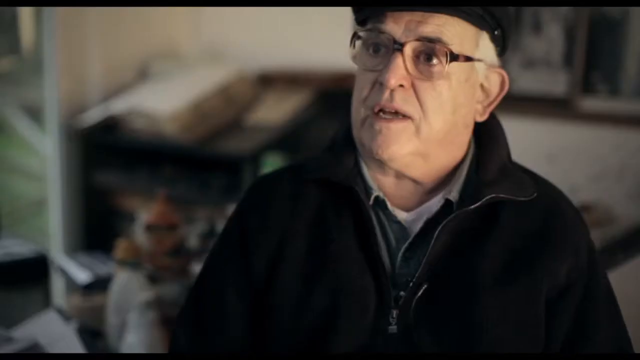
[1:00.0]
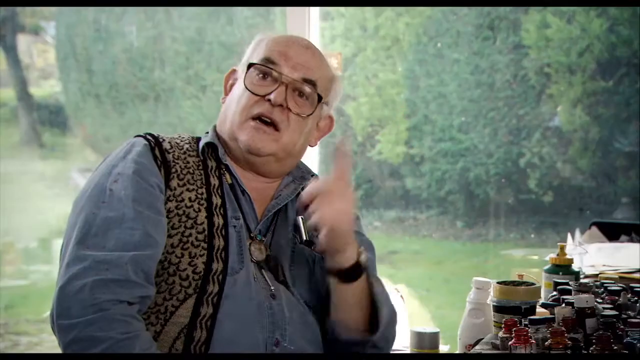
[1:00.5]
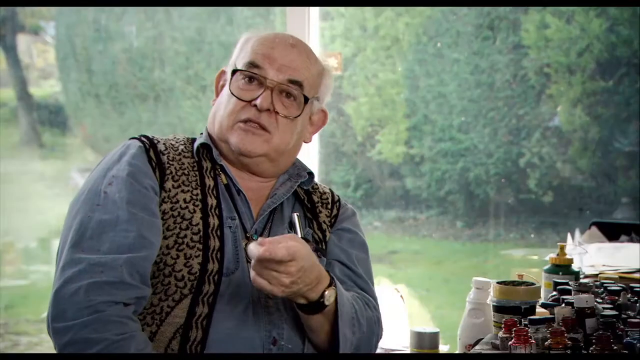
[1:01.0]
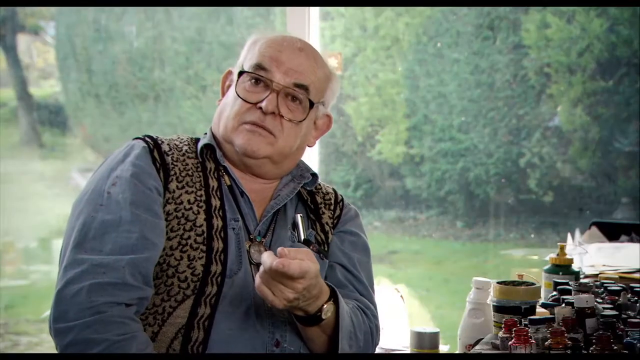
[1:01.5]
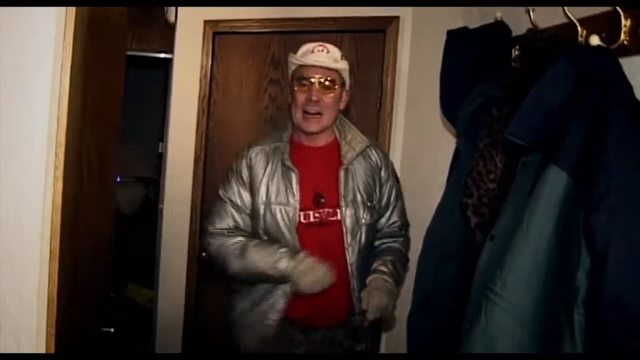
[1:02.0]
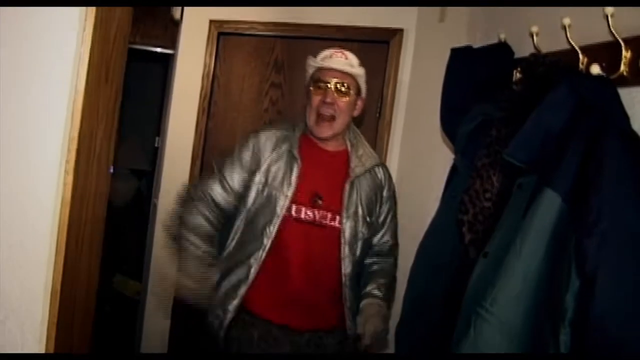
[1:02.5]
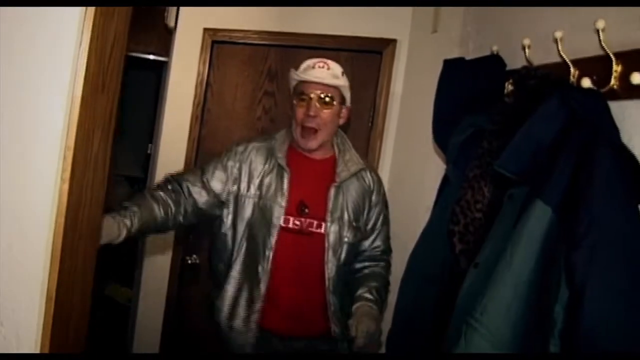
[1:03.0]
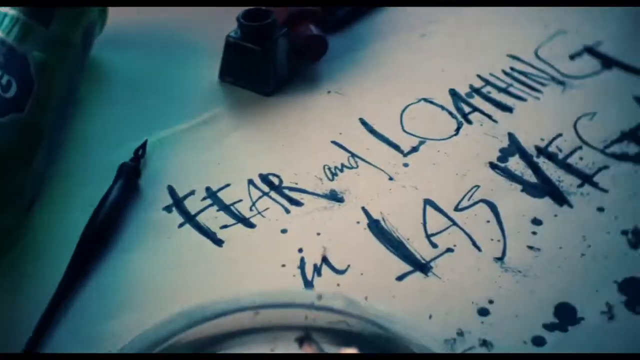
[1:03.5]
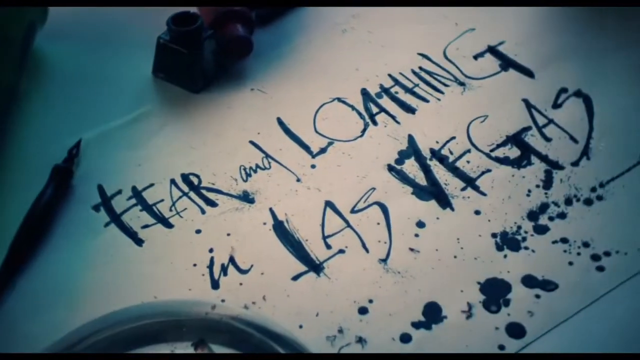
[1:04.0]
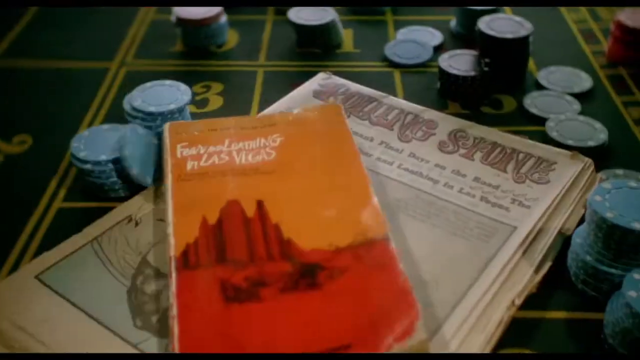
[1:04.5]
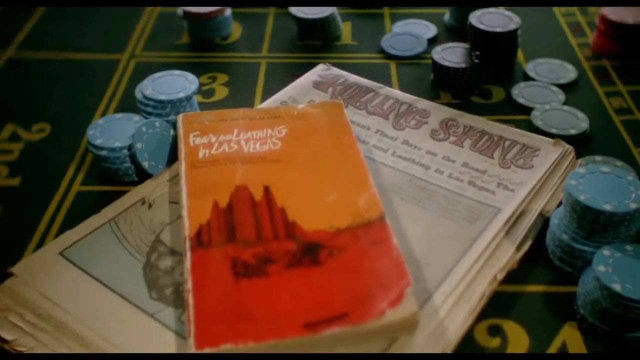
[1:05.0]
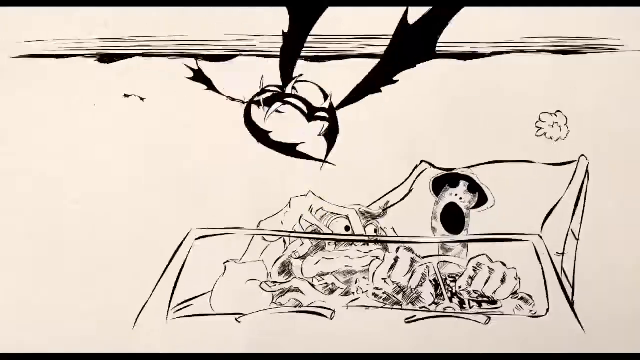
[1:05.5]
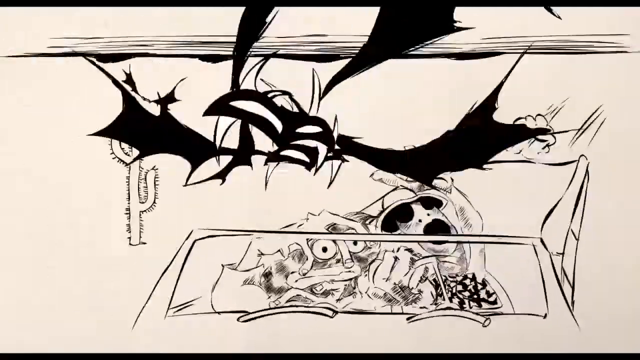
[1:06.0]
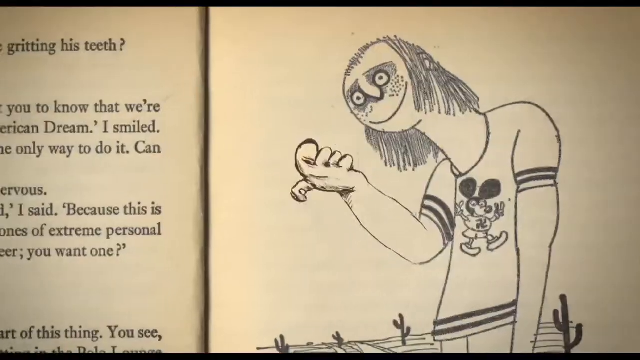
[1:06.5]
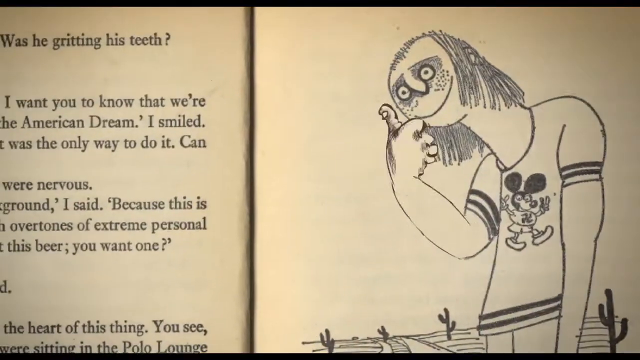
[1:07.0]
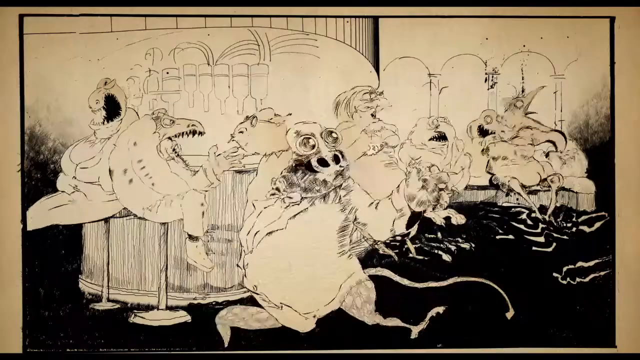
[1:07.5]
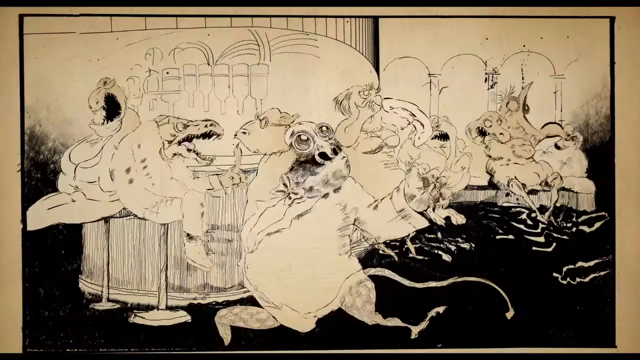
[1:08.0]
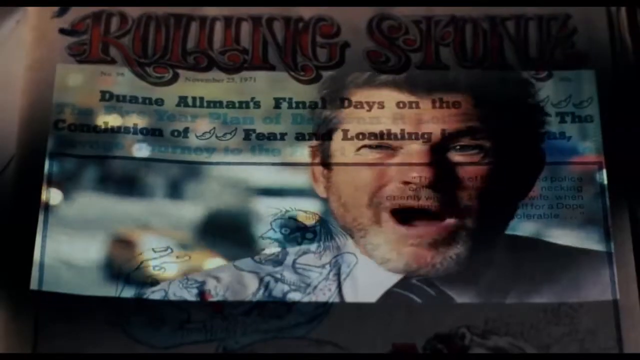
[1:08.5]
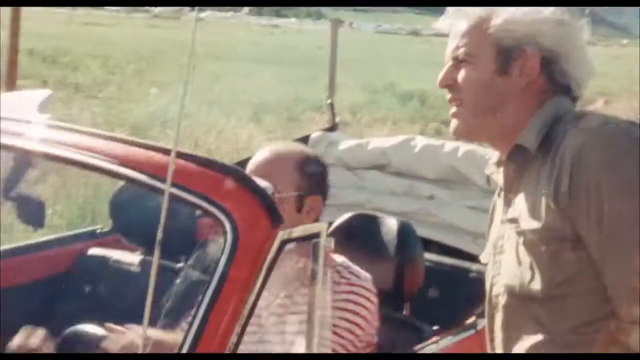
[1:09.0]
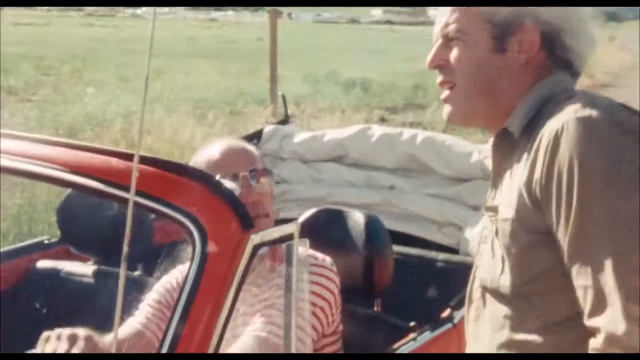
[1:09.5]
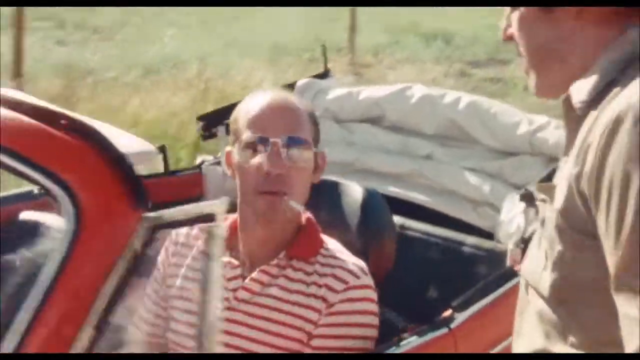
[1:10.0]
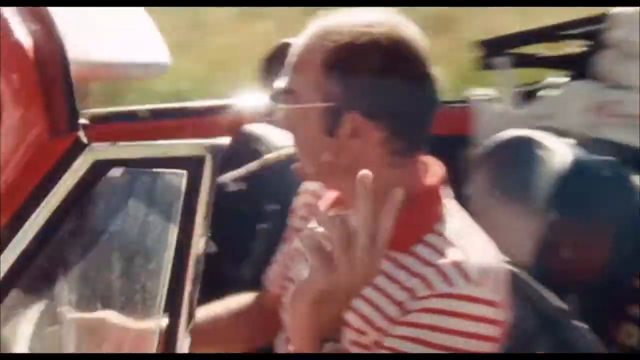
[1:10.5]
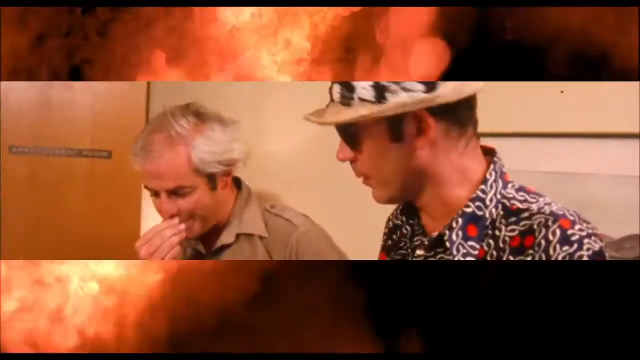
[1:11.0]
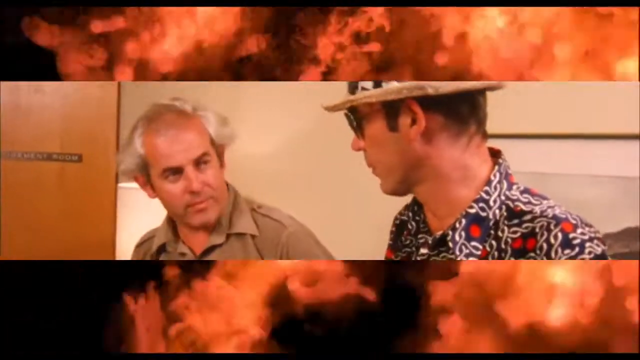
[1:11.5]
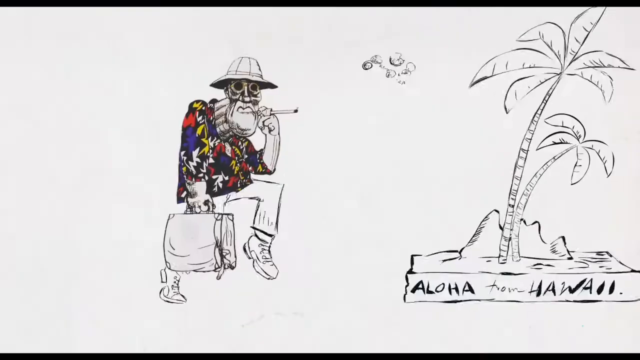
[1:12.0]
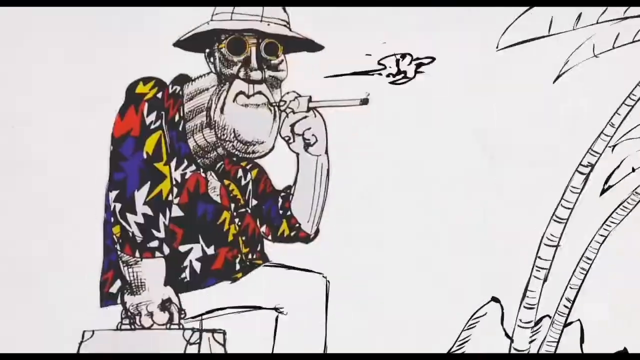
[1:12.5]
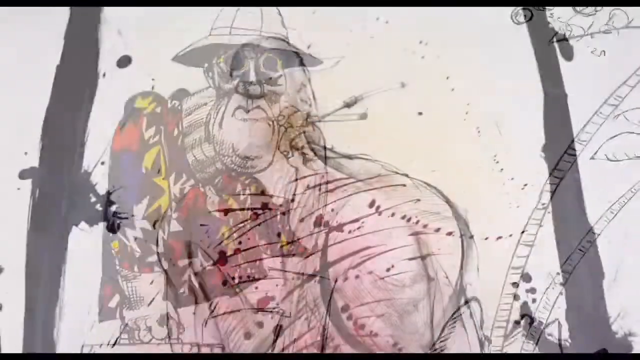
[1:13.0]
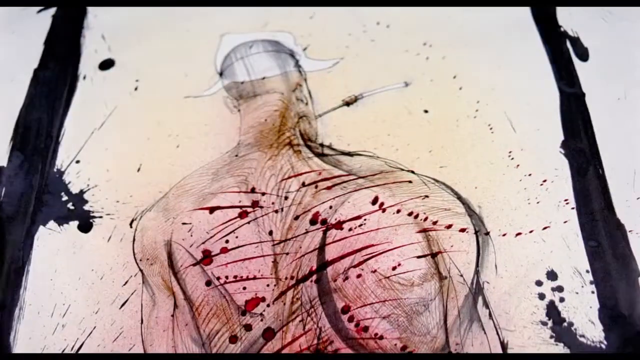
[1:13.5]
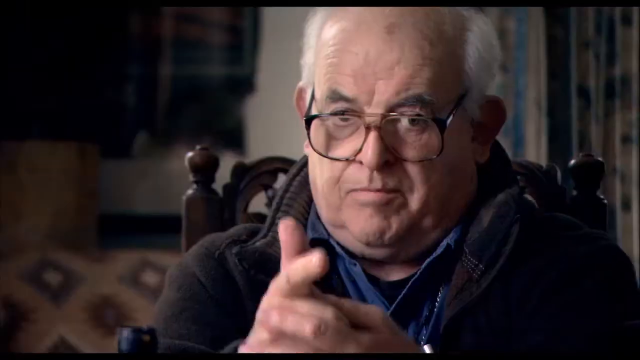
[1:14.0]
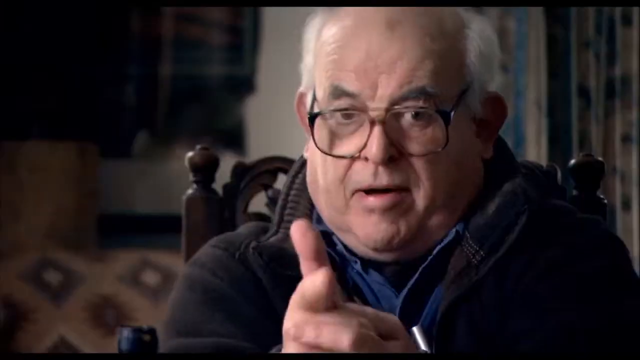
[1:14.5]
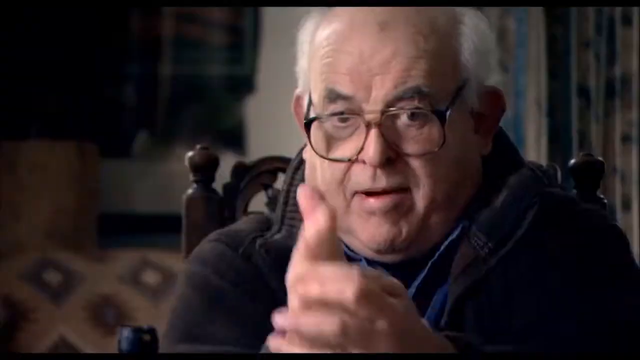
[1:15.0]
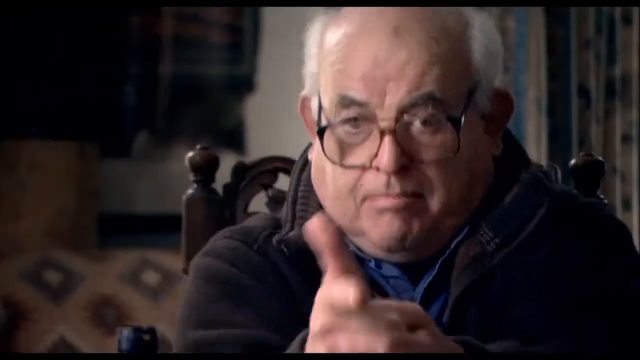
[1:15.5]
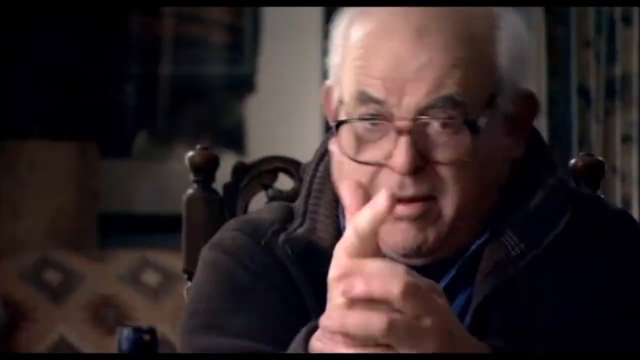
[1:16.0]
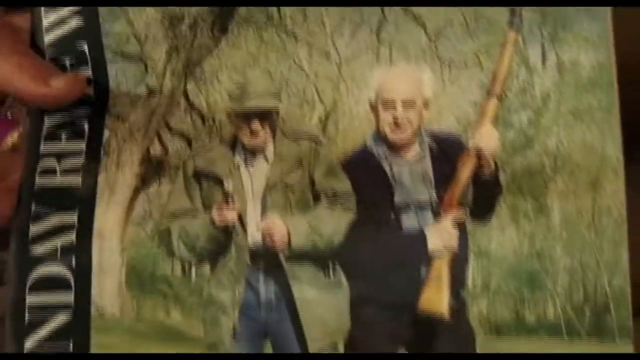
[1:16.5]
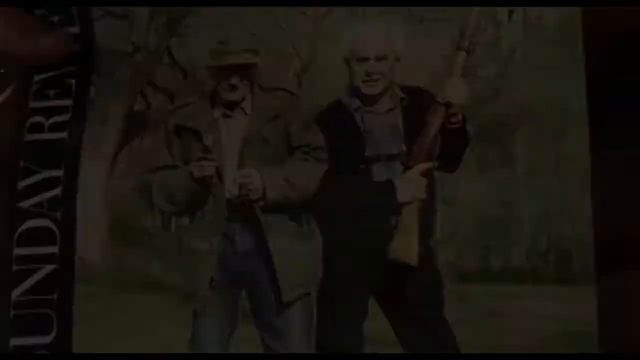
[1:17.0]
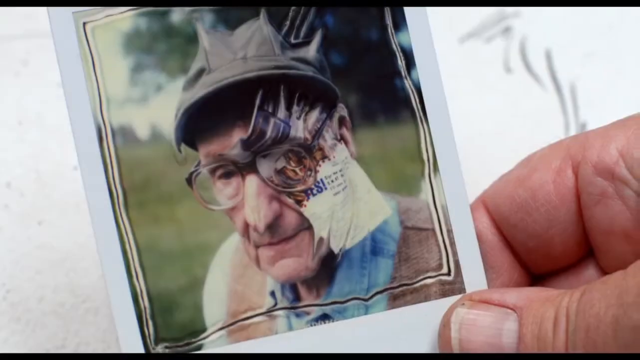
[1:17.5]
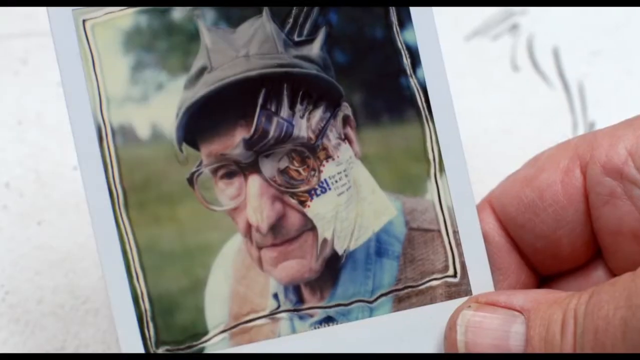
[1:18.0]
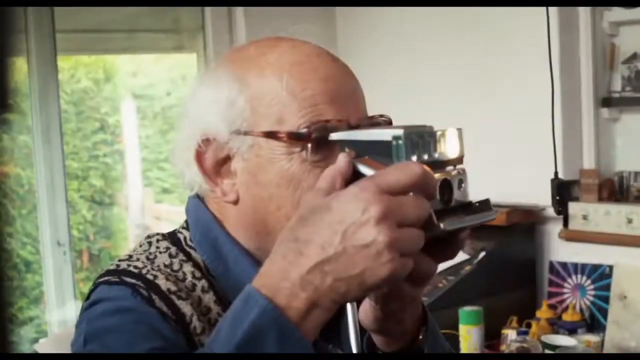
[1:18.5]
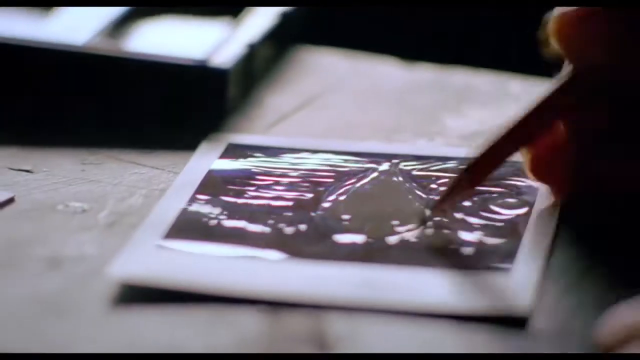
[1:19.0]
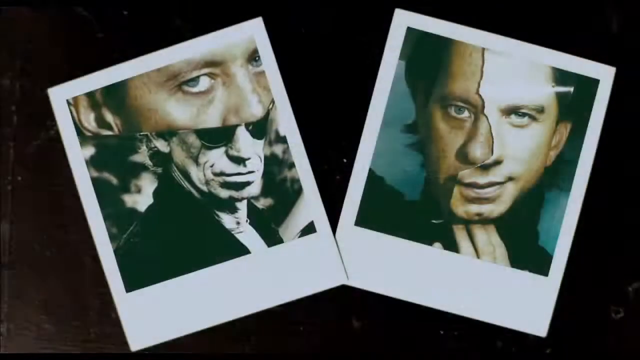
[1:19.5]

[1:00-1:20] Someone wears a cap and a hat, and another person is in a gray jacket, a red shirt and a hat. There are images that appear horrific, and he continues working on them.